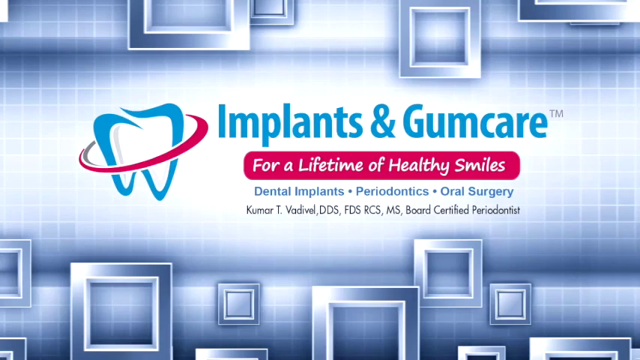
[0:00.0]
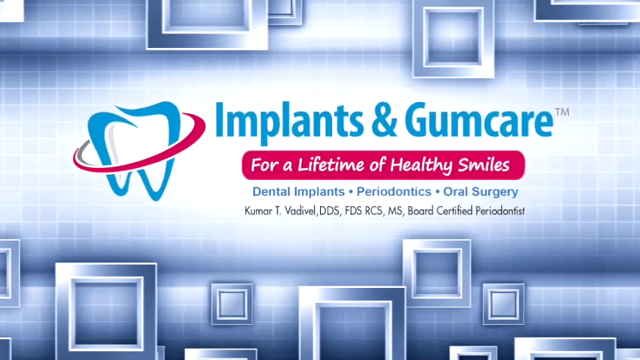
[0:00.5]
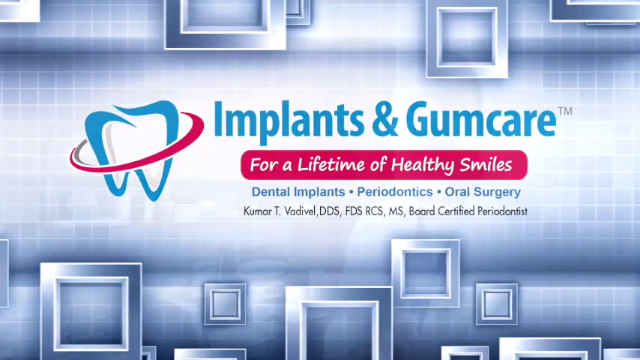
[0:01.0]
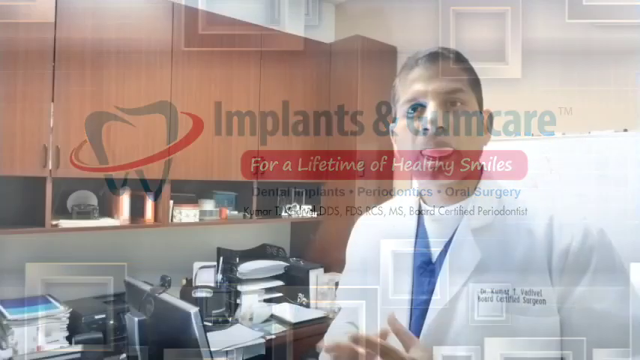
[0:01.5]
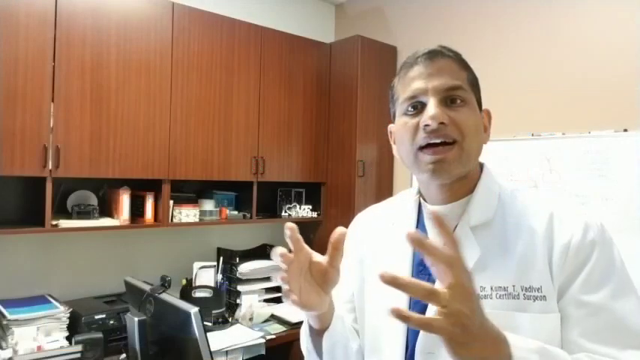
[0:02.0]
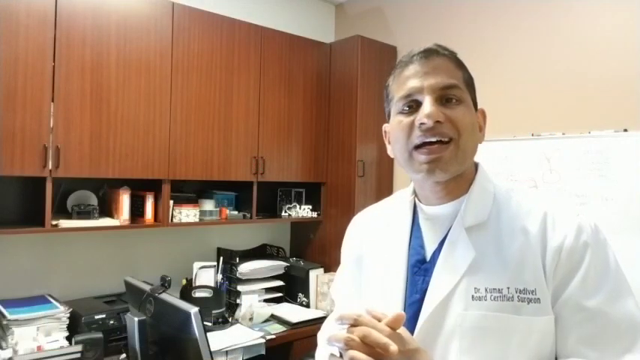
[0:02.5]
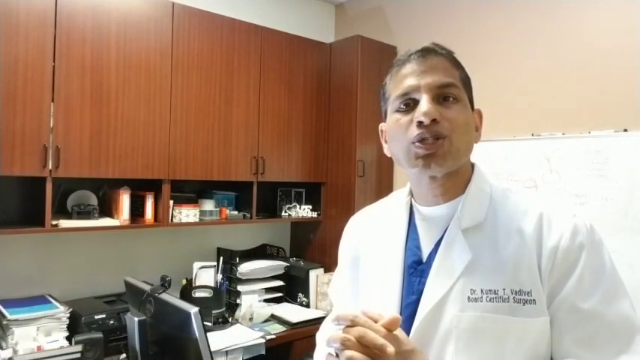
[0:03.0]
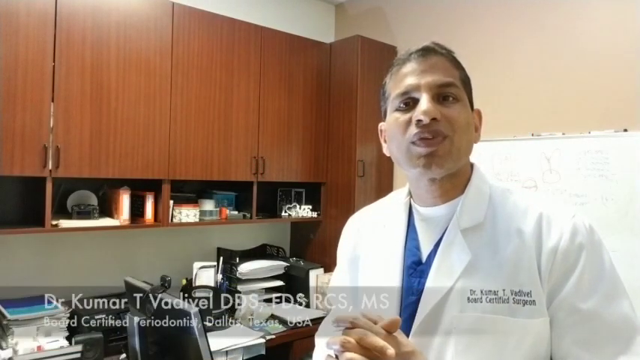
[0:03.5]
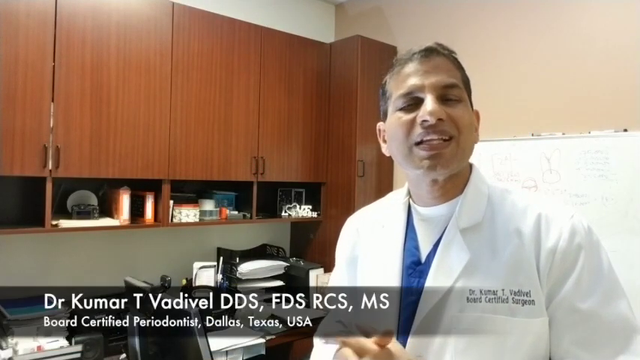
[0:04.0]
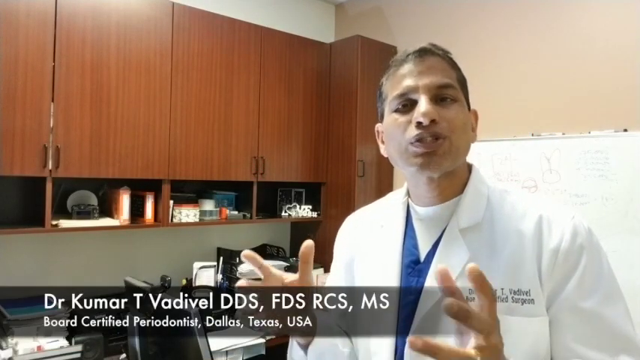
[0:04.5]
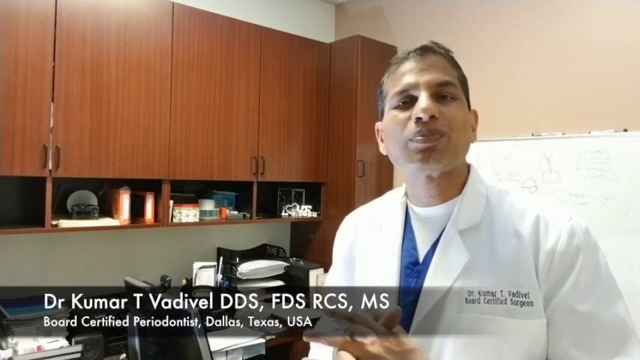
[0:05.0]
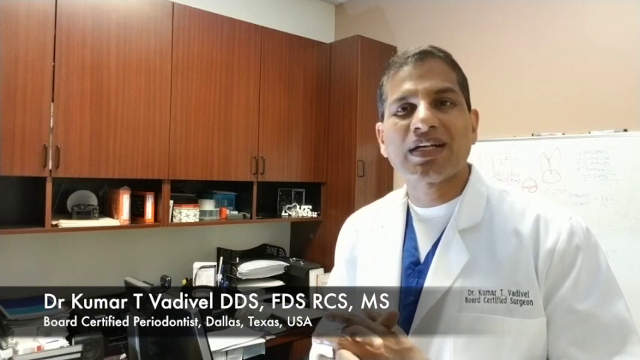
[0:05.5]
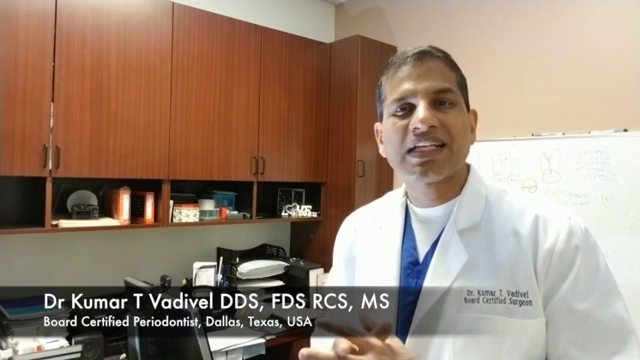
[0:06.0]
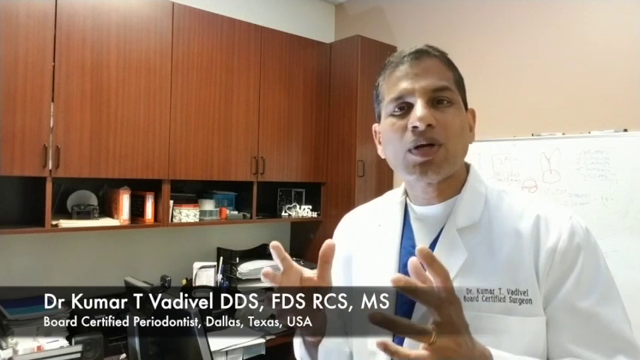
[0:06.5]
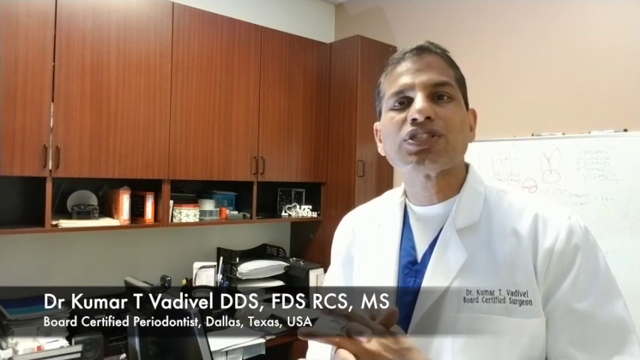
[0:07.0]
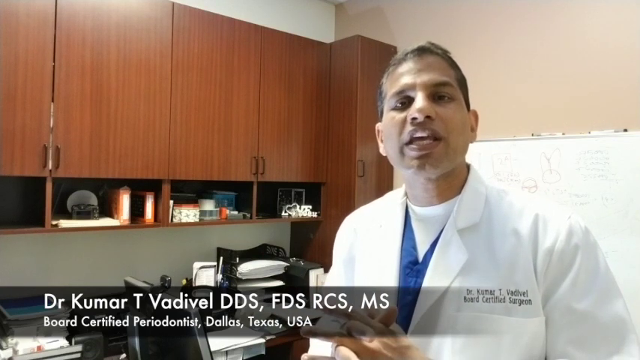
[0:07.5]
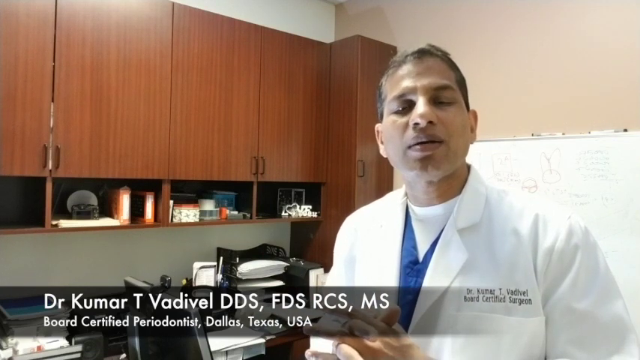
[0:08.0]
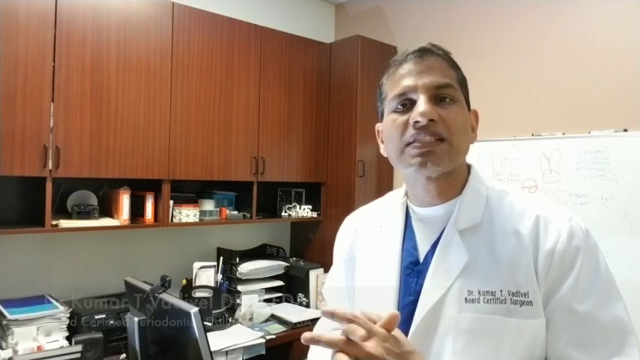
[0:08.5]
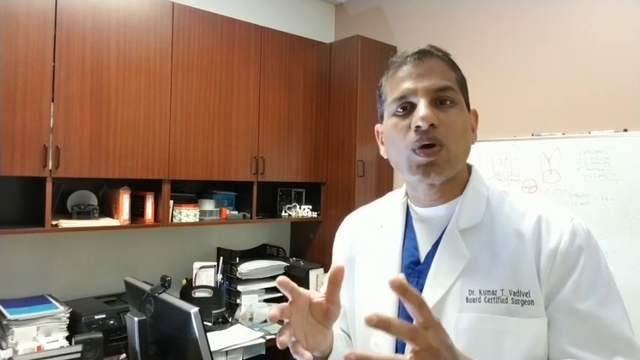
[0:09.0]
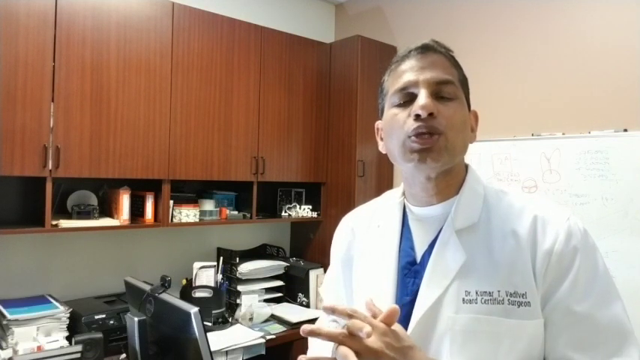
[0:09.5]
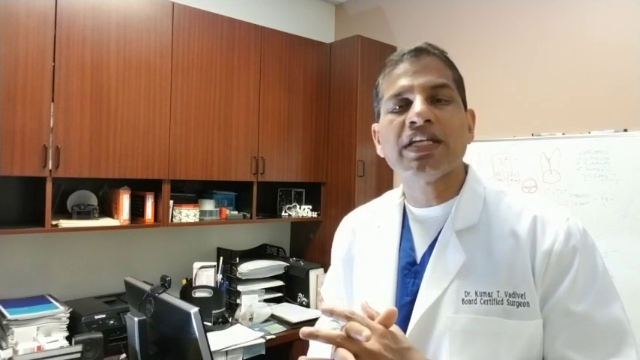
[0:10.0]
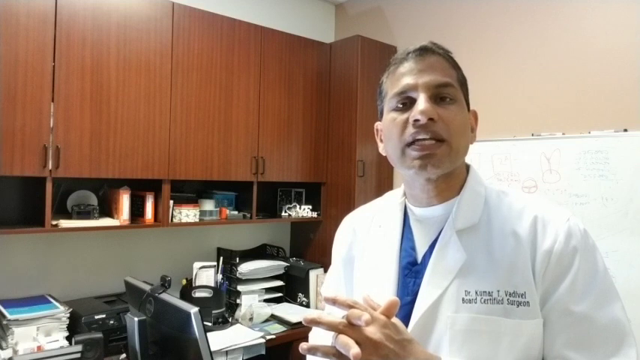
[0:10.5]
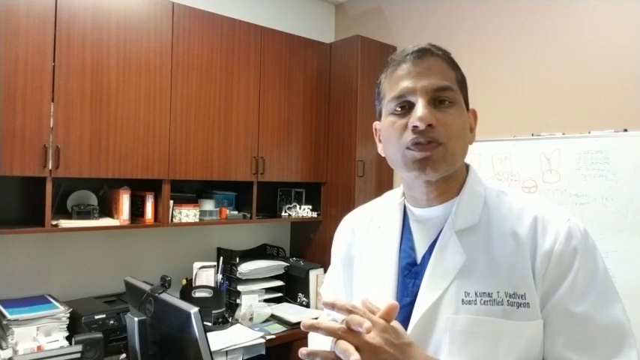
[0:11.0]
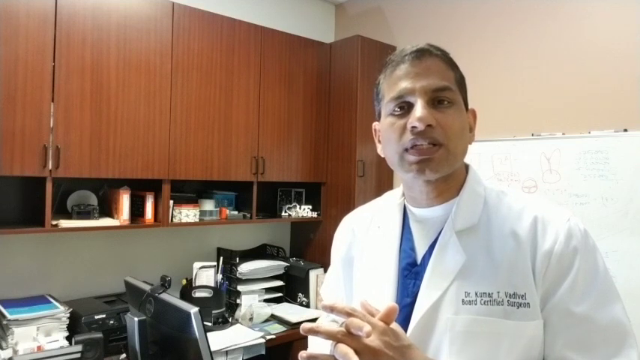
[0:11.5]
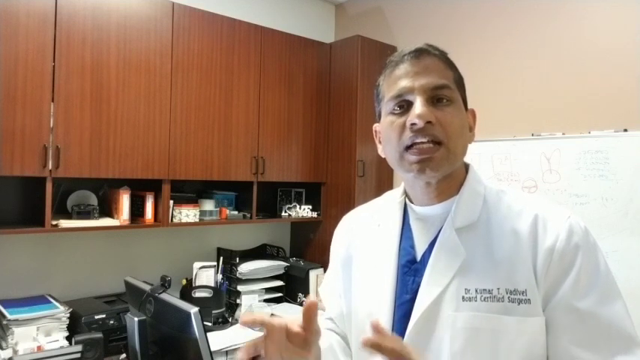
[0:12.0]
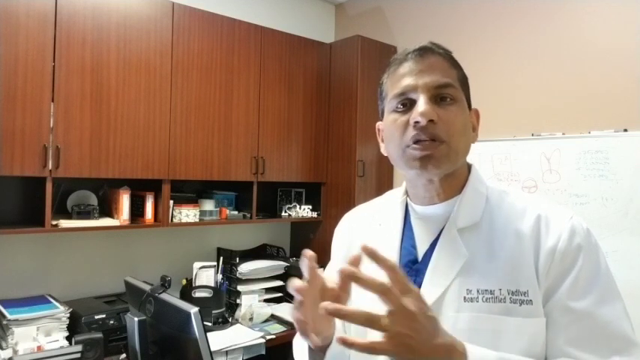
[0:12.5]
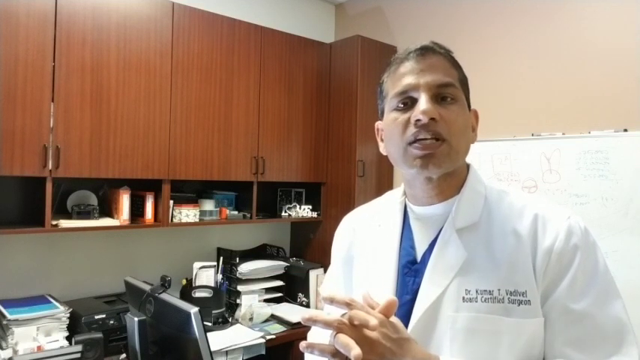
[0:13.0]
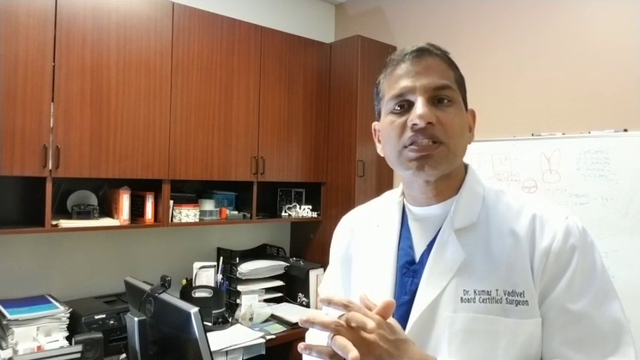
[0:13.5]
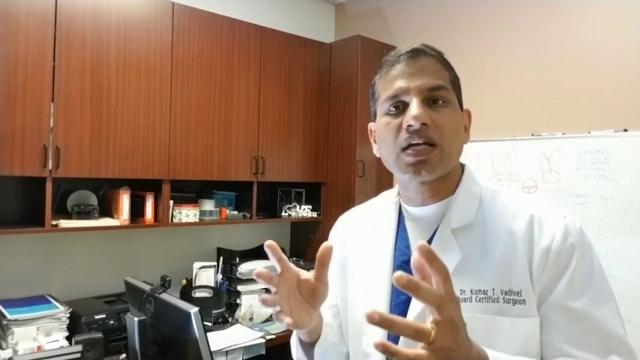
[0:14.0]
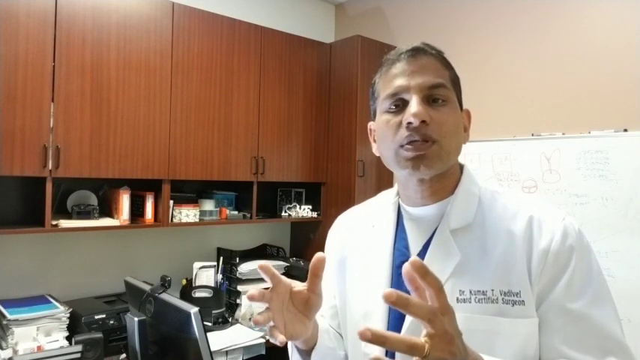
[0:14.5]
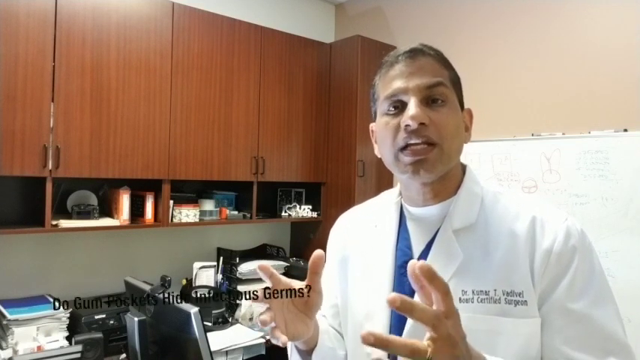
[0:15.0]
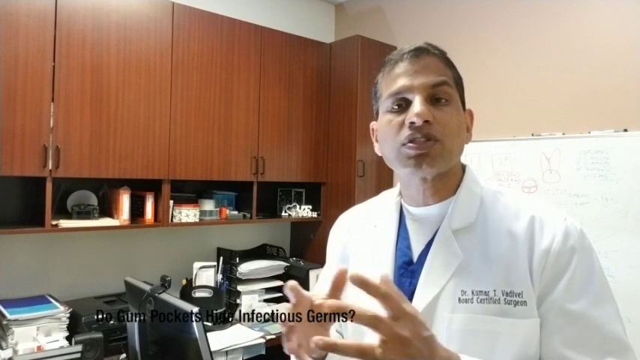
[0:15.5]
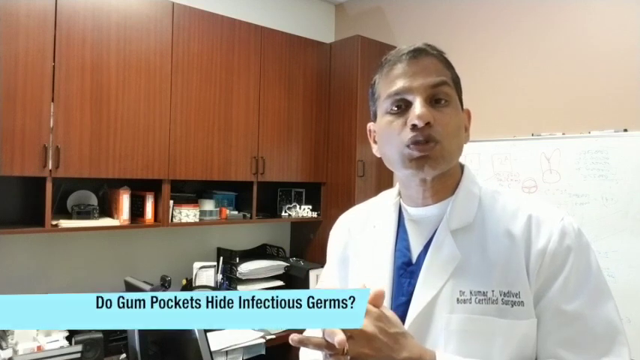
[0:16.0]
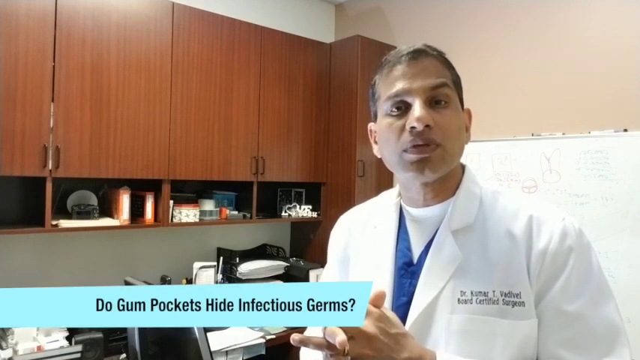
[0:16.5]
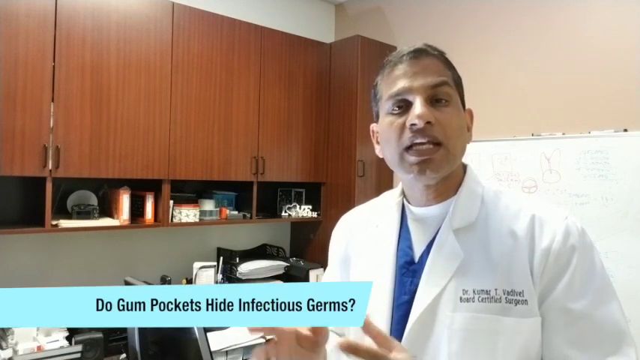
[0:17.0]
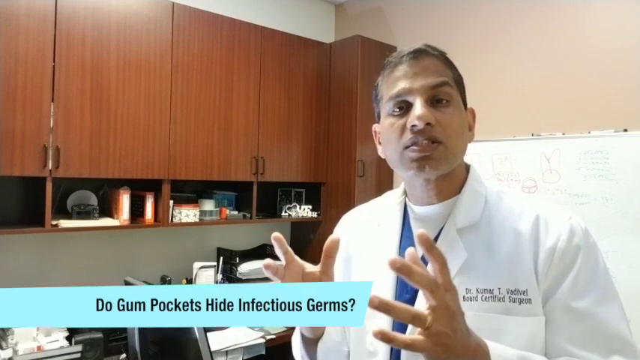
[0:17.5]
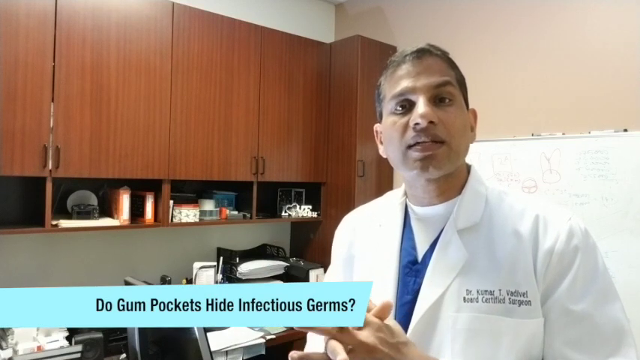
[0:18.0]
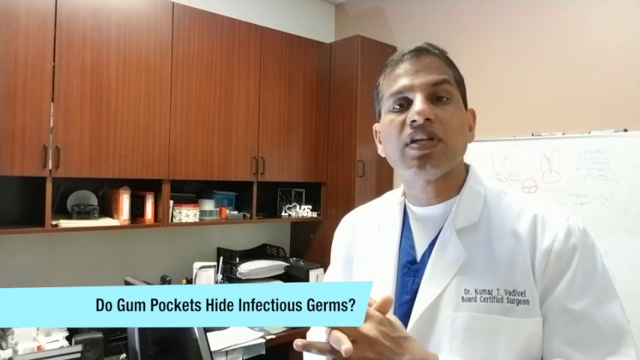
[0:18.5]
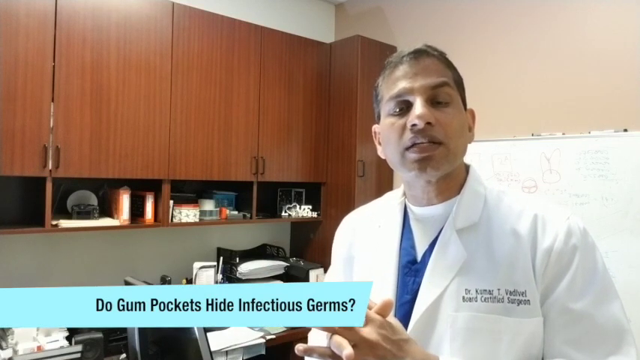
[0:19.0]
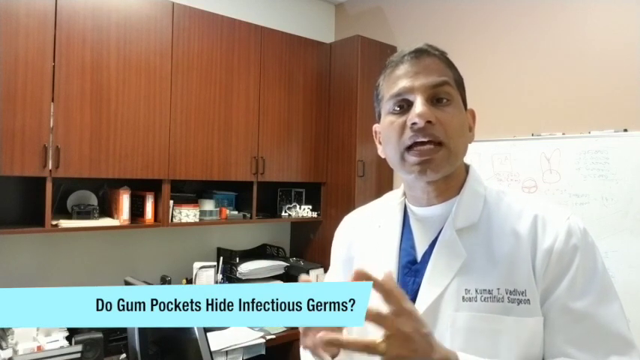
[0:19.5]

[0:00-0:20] A title slide opens the video. Its background is a light blue cubic pattern reminiscent of mathematics graph paper, with various floating blue squares superimposed on top; the squares have a blue, silvery sheen, as if metallic. In the middle of the screen are a logo and title text. The logo is a stylised light blue tooth showing the outline of the tooth, with the ridges at the top and the root at the bottom, and a red stripe orbiting it. The title text reads "Implants and Gum Care", and below it a red stripe with white writing contains the subtitle "For a Lifetime of Healthy Smiles". Below that, smaller text reads "Dental Implants, Periodontics and Oral Surgery", and in very small font is the name of a dentist: "Kumar T. Vadivel, DDS, FDS RCS, MS, Board Certified Periodontist". The slide disappears, and a man in a white lab coat appears. The lab coat has his name on it: Dr. Kumar T. Vadivel. Under the lab coat he wears a blue scrub top with a white t-shirt under that. He is standing in an office, with a whiteboard visible behind him to the right and large veneer wooden wall cabinets to his left. At the bottom left is a computer monitor with a webcam on top, and behind that are a printer and various in and out trays filled with paper.